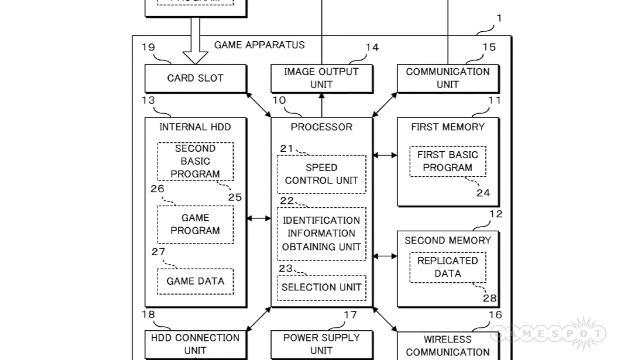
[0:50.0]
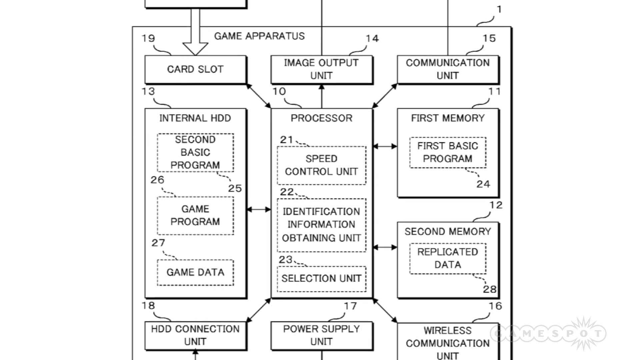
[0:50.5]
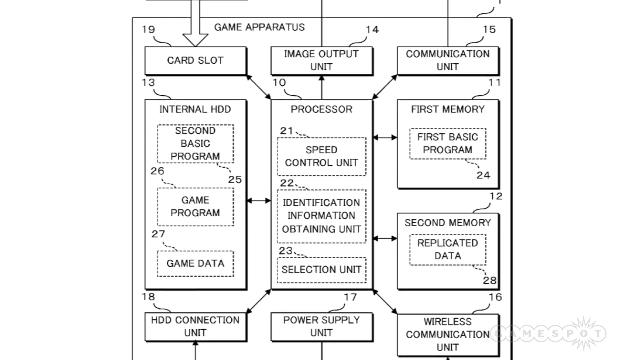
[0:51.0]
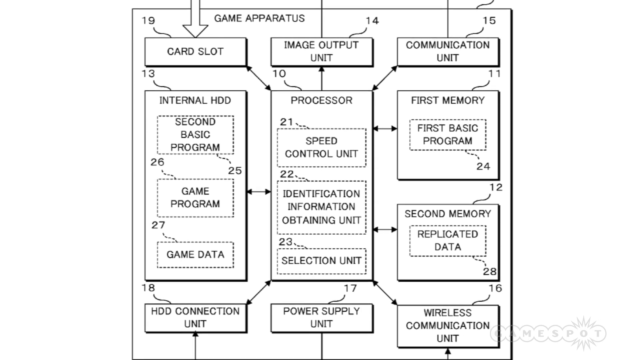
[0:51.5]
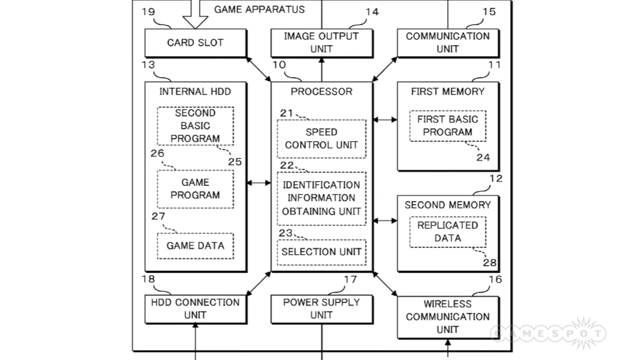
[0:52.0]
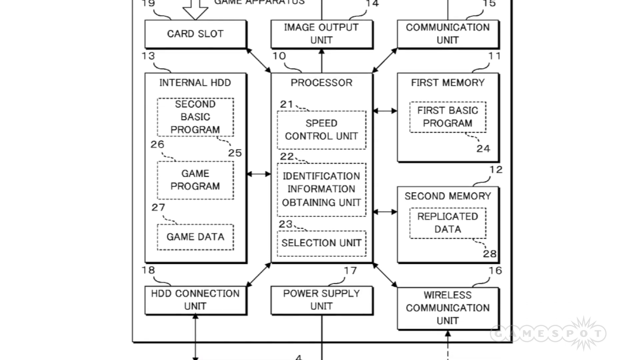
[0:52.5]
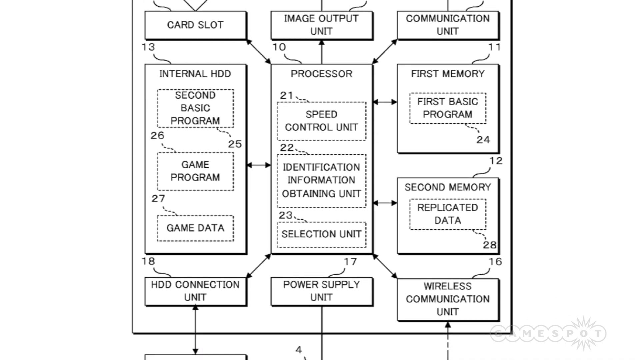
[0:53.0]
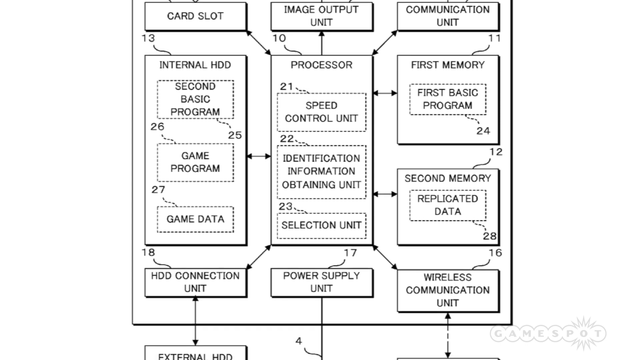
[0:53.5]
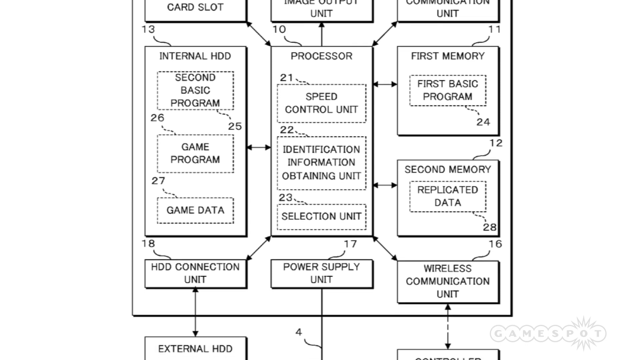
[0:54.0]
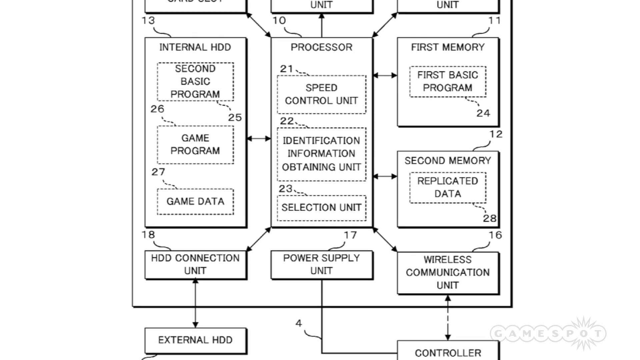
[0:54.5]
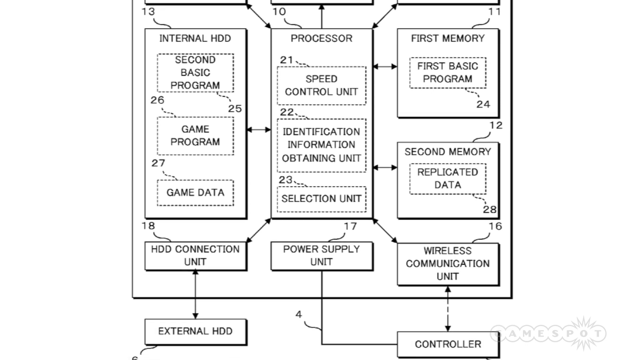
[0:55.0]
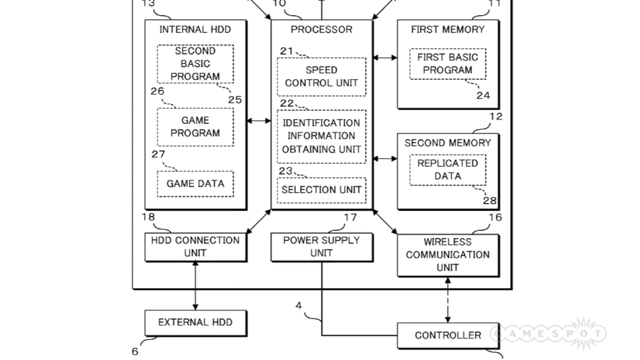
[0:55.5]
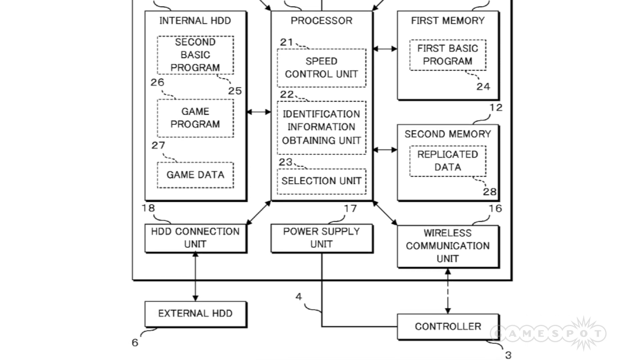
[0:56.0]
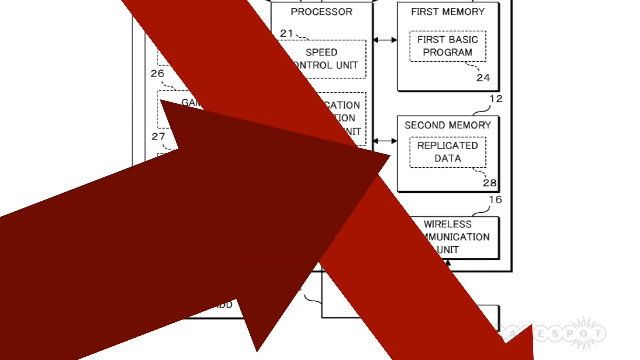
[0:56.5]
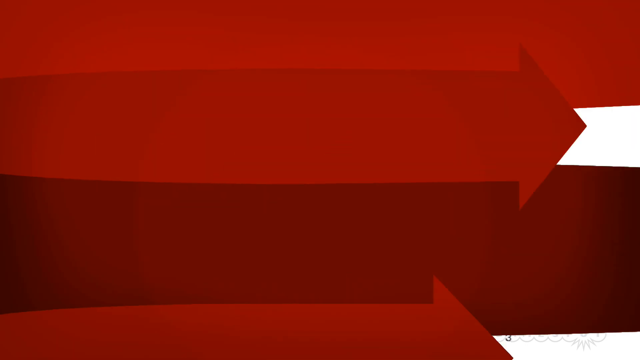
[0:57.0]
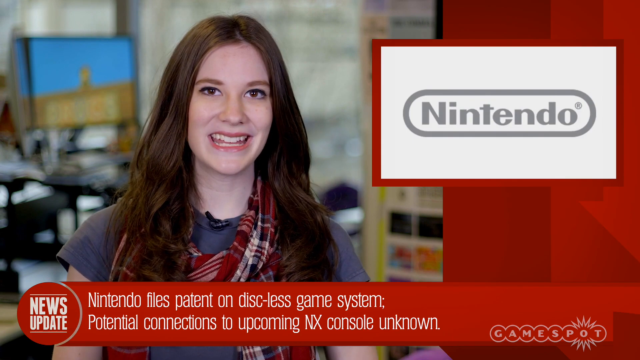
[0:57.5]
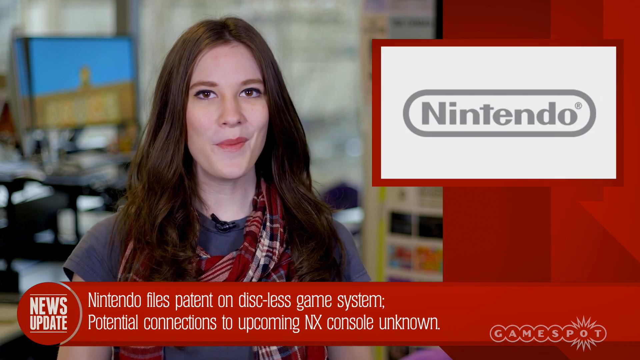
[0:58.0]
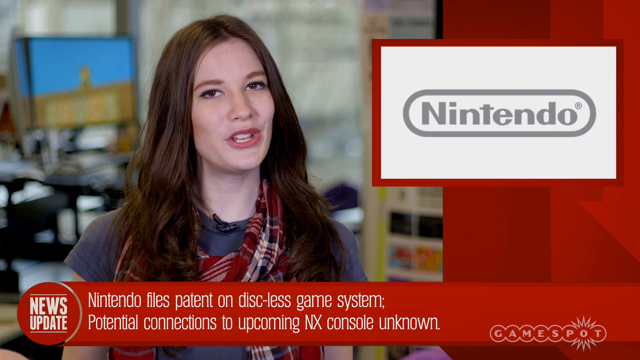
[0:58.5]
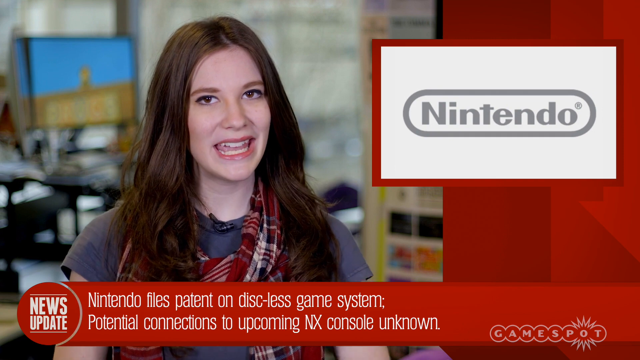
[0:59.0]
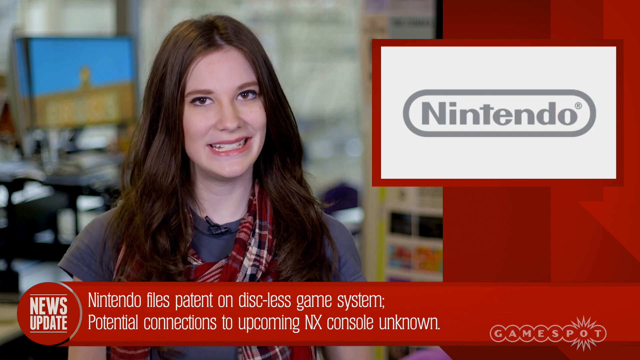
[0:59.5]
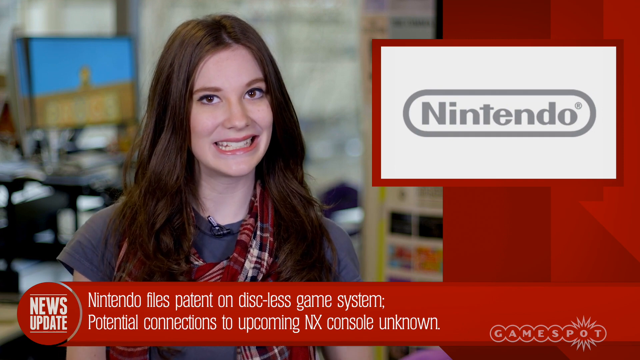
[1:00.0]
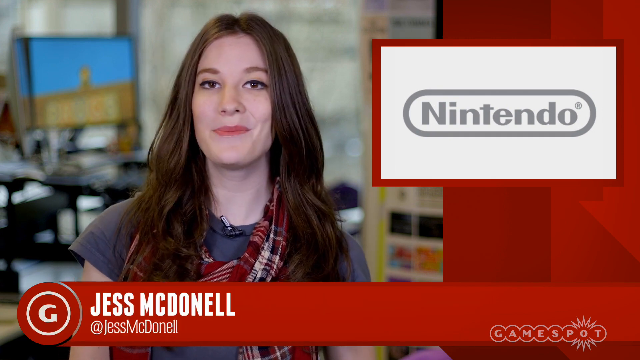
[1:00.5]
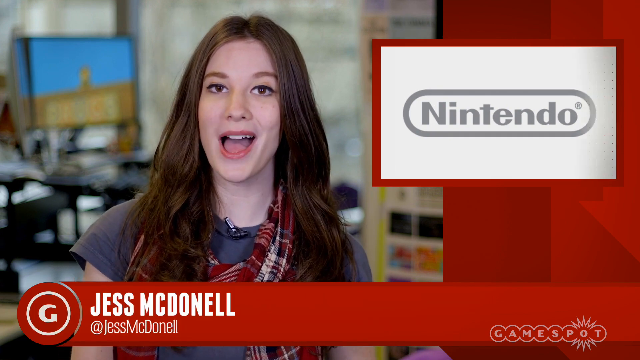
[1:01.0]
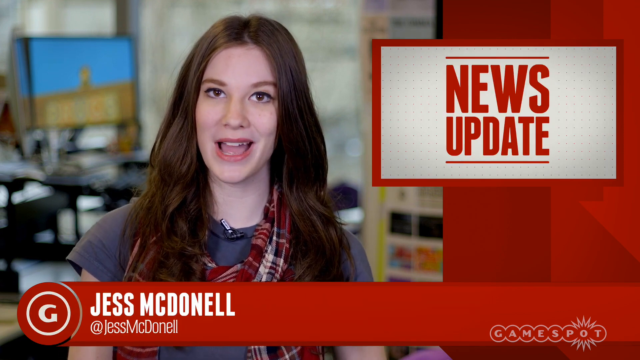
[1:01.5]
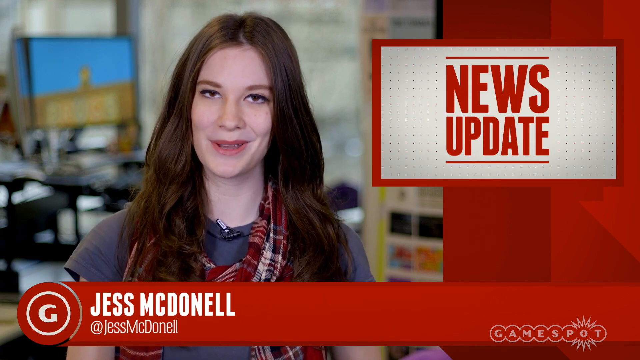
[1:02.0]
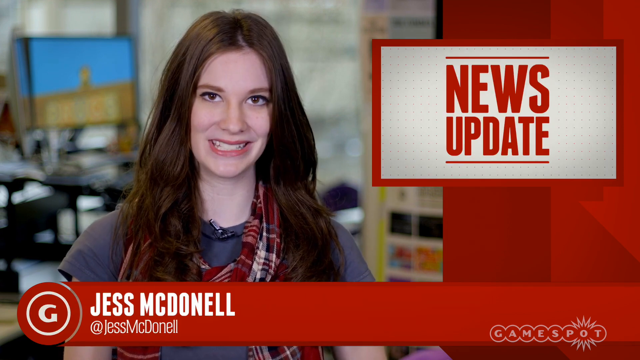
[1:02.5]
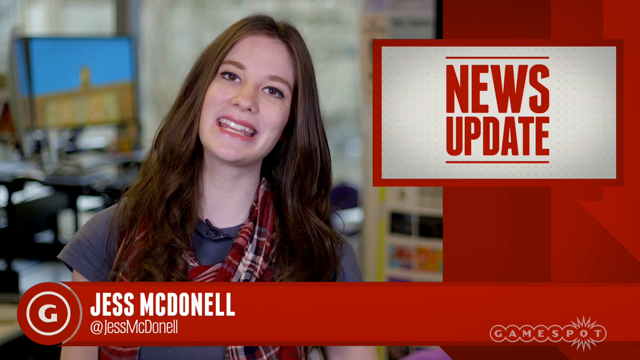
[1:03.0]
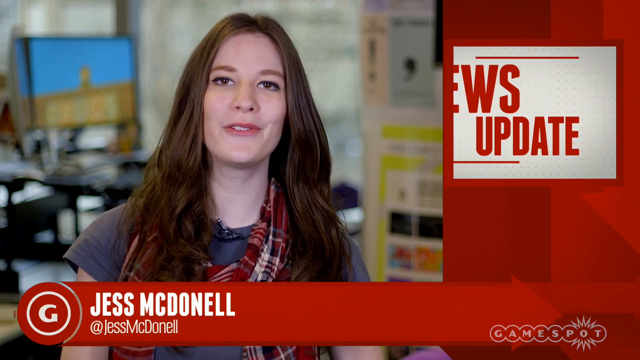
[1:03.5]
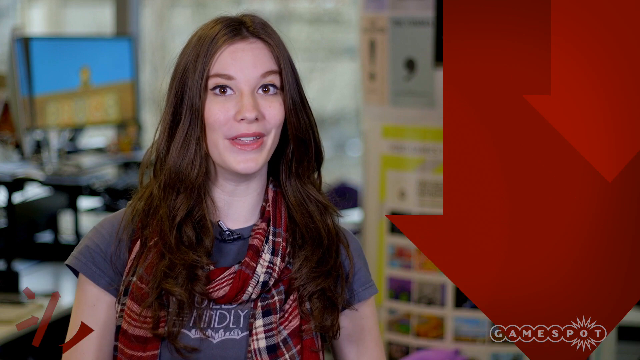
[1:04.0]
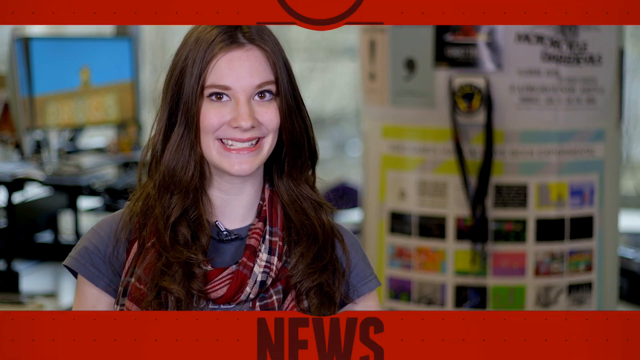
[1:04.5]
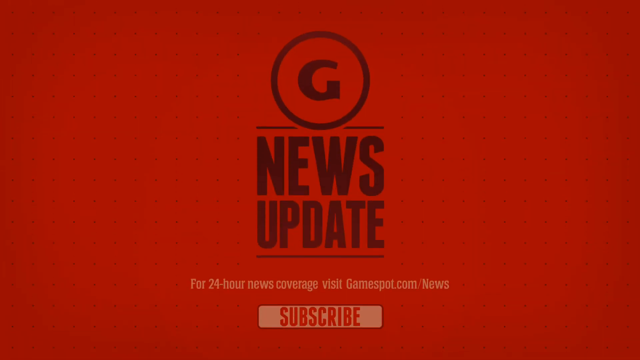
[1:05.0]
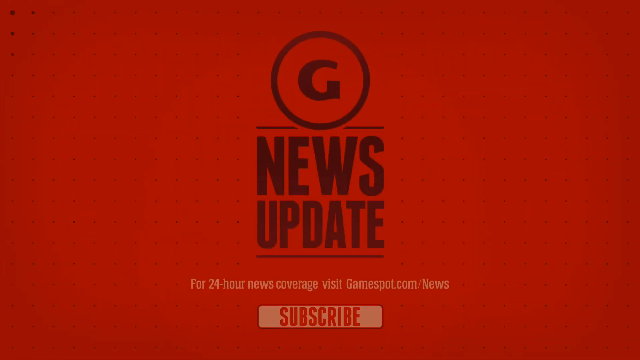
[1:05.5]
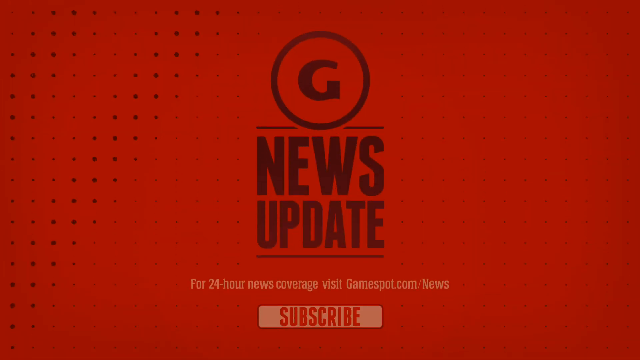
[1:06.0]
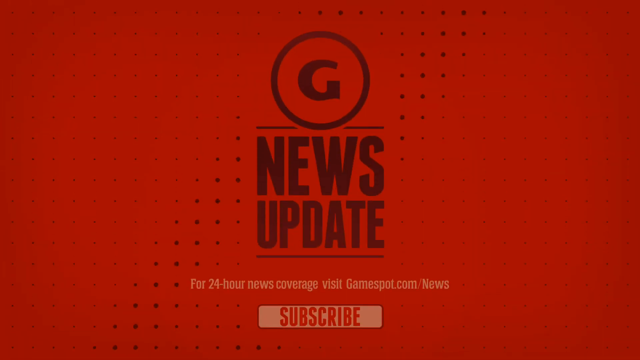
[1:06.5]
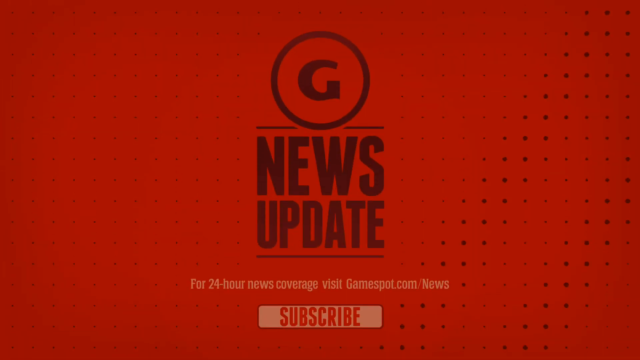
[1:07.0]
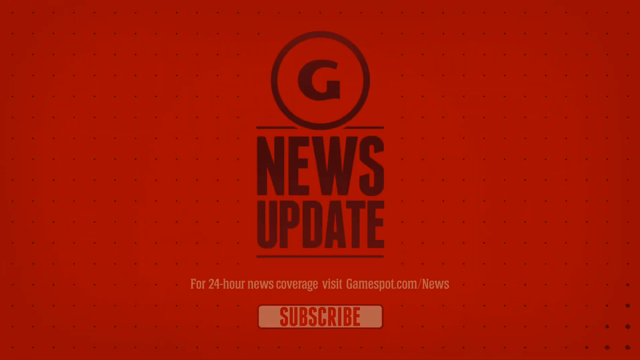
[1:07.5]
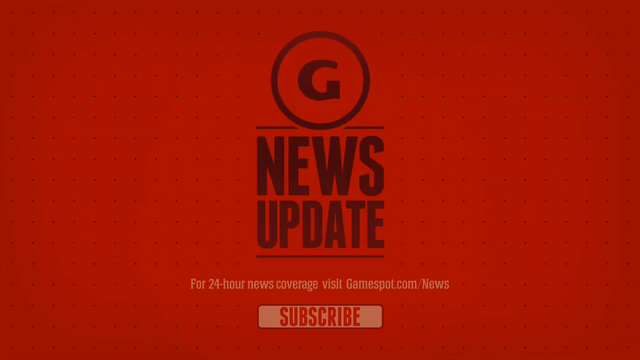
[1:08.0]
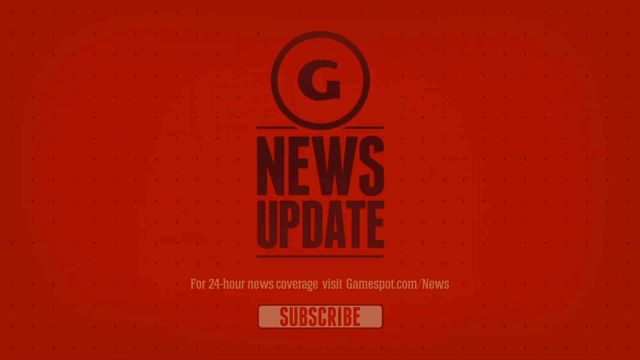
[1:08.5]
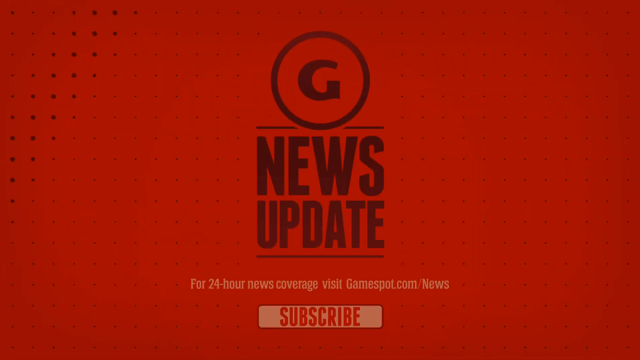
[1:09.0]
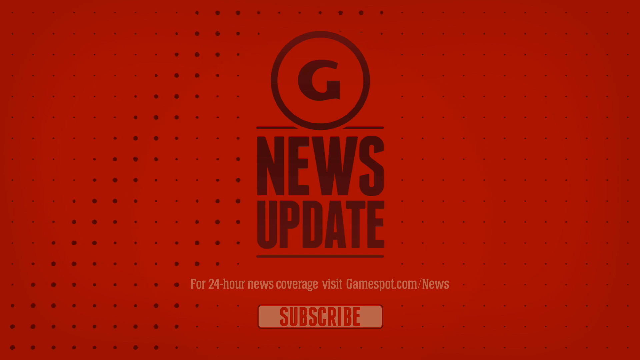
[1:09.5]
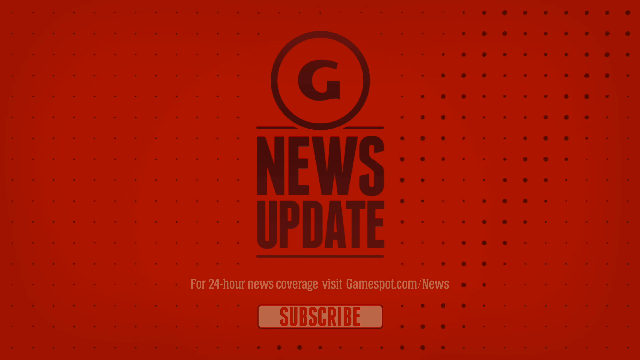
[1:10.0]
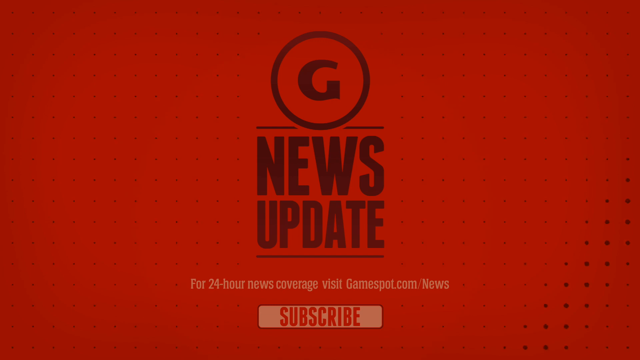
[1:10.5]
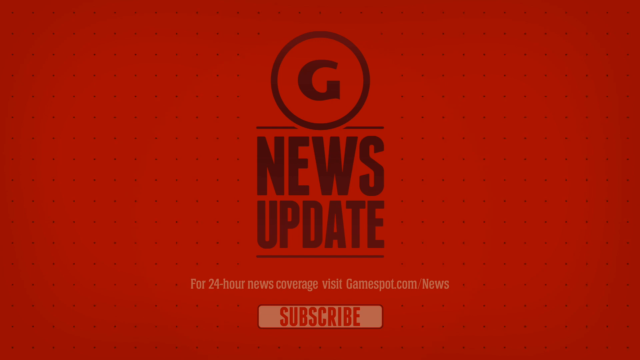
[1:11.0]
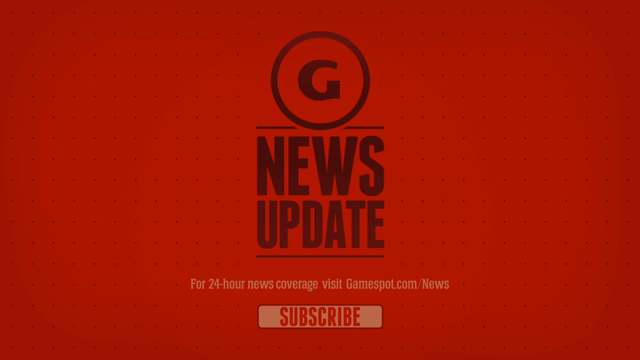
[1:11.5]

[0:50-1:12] The view continues to zoom down what is just one long square, and at the bottom thick red arrows swipe across the screen. The host returns, with an insert of the Nintendo company name on the screen. She keeps her eyes set on the camera while her mouth is wide as she talks; she talks with her chin down and the corners of her bottom lip dragged down, so her mouth is very wide and both sets of teeth are visible. She turns her head to the right, almost a flip, and the left side of her mouth goes up. The left side of her face is visible and her jaw tightens. She drops her head and her mouth opens wide, then she tilts her head back, looks straight ahead with her eyes wide, and raises her hand slightly as her arms move. Her mouth is wide in a smile as she looks straight into the camera. Her eyes have more of a deadpan expression, showing little expression except for a subtle brow raise. Red then slides onto the screen from the top and the bottom, creating the red background with the G logo and "News Update". At the bottom is a rectangle that says "subscribe" along with a tagline for 24 hour news coverage with "GameSpot.com news".